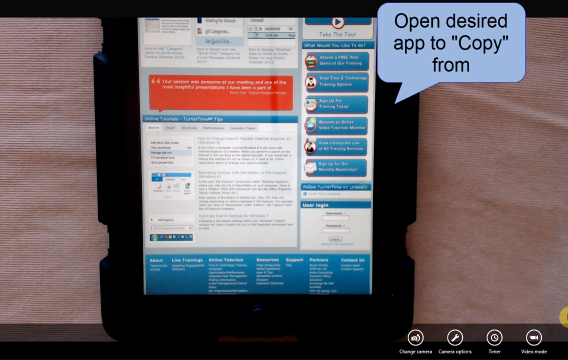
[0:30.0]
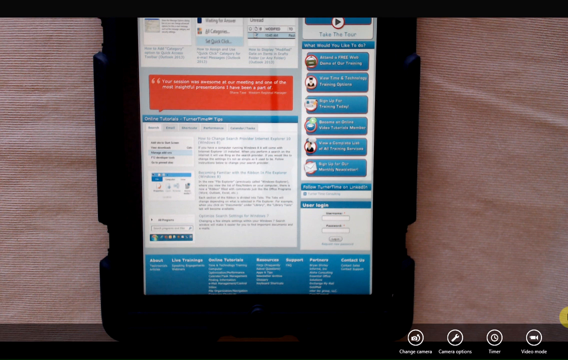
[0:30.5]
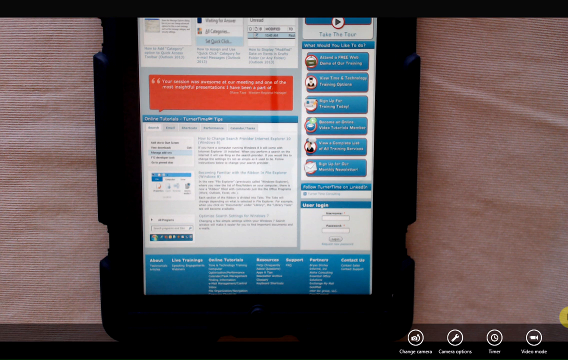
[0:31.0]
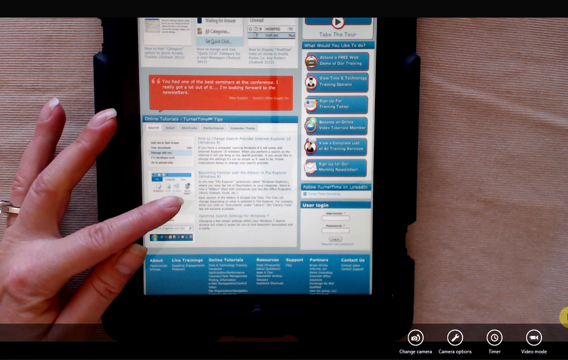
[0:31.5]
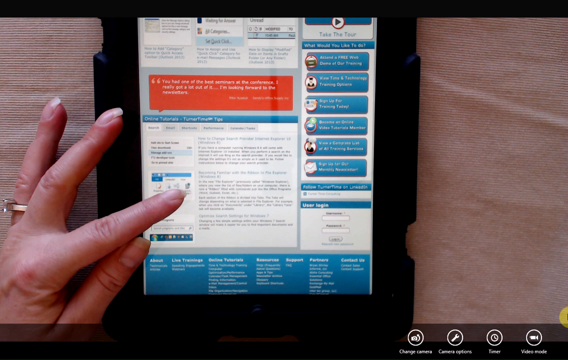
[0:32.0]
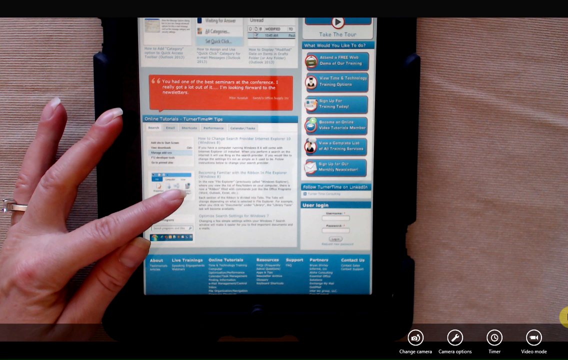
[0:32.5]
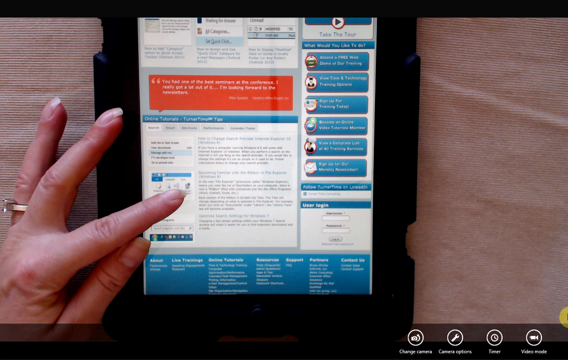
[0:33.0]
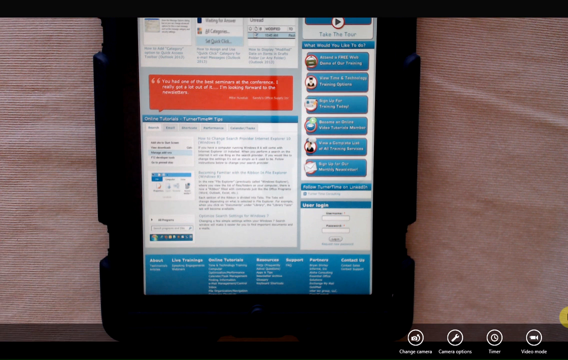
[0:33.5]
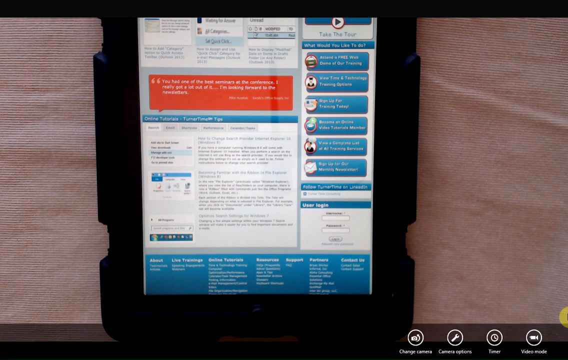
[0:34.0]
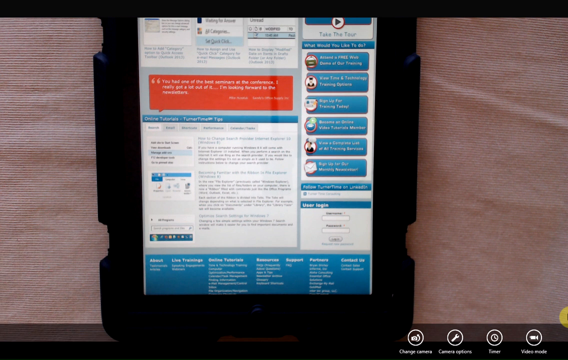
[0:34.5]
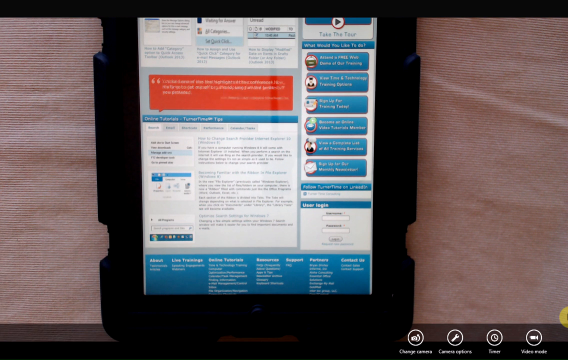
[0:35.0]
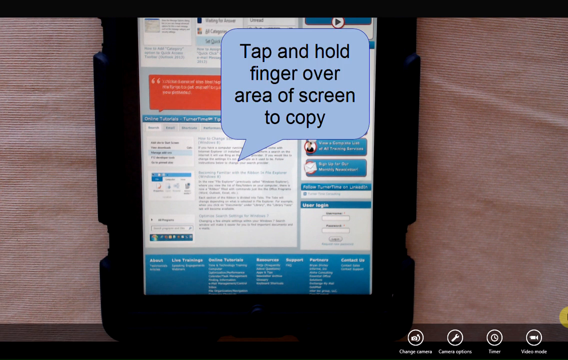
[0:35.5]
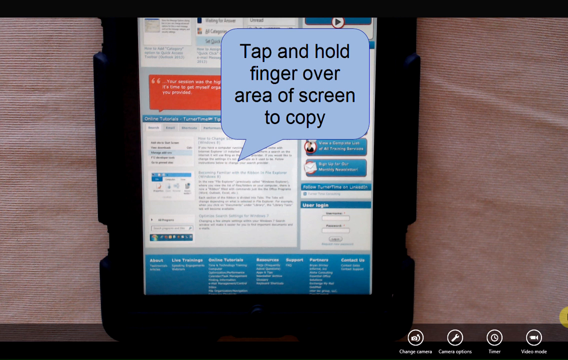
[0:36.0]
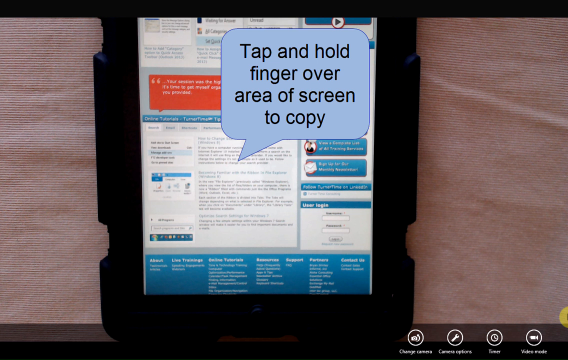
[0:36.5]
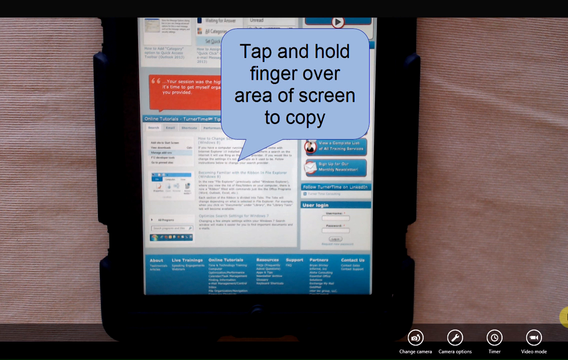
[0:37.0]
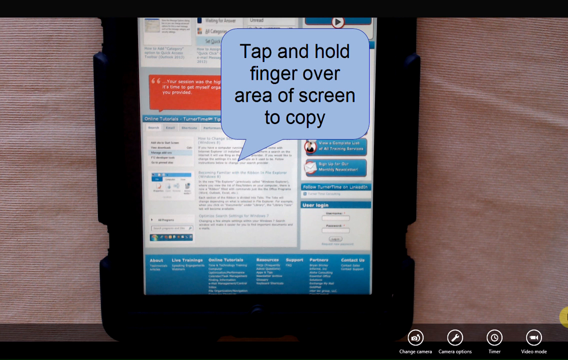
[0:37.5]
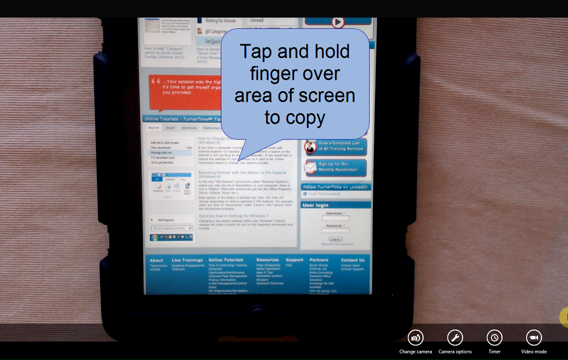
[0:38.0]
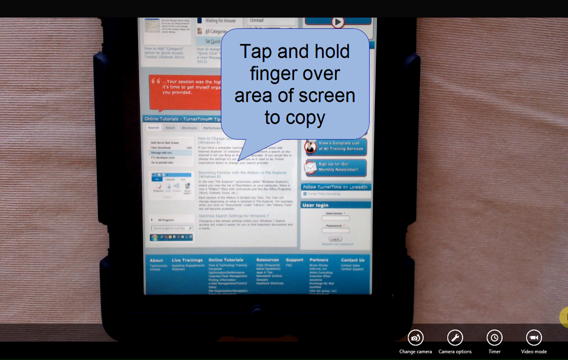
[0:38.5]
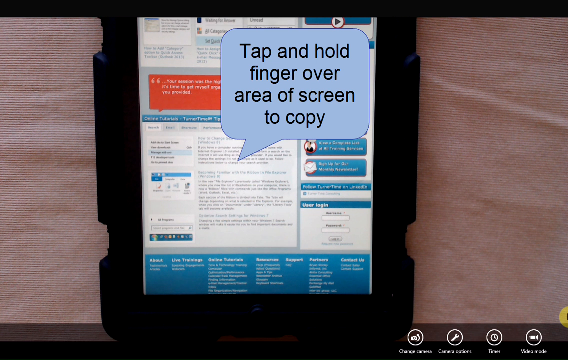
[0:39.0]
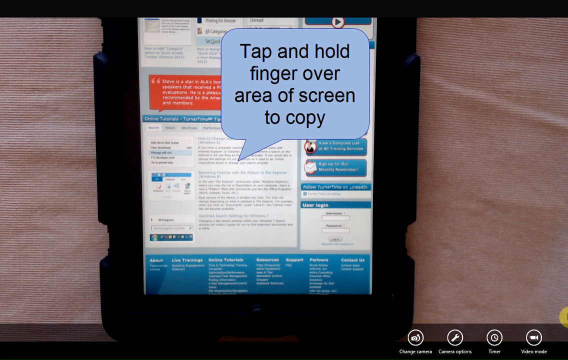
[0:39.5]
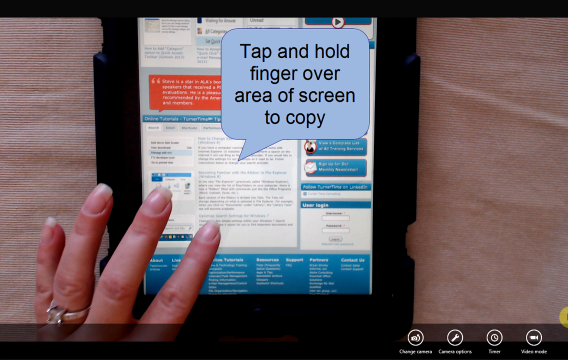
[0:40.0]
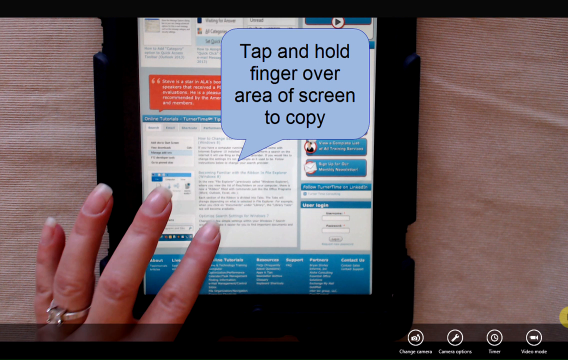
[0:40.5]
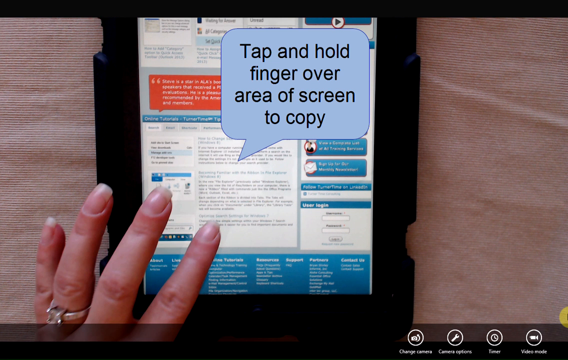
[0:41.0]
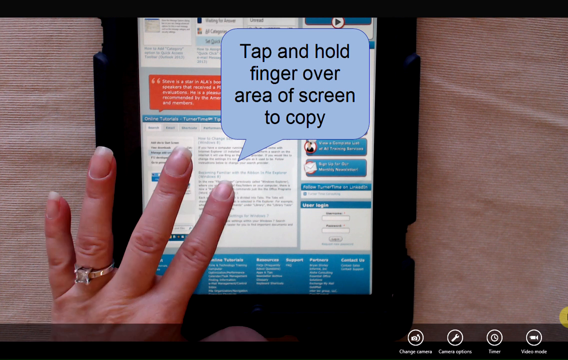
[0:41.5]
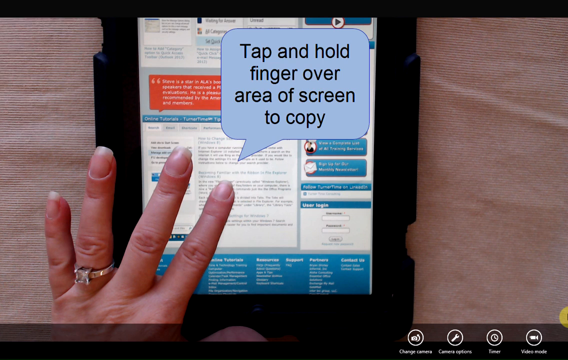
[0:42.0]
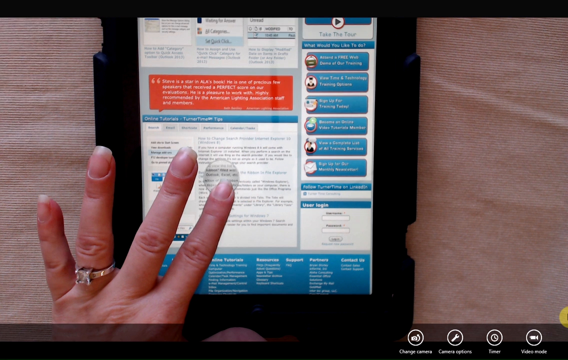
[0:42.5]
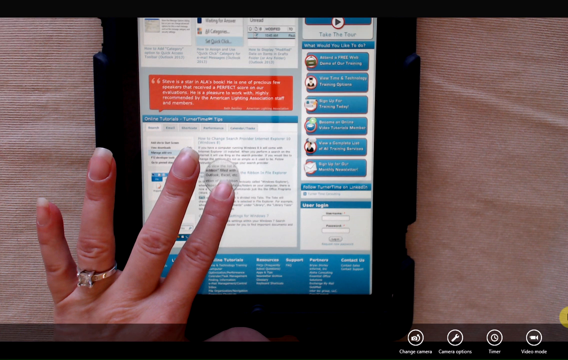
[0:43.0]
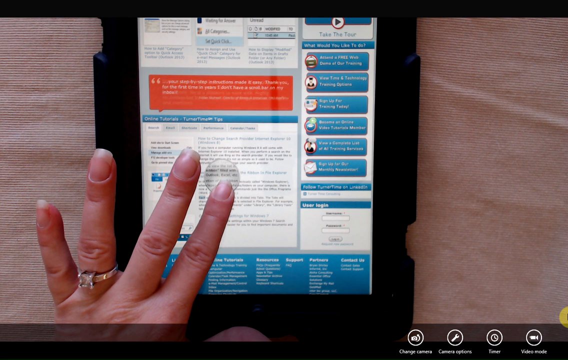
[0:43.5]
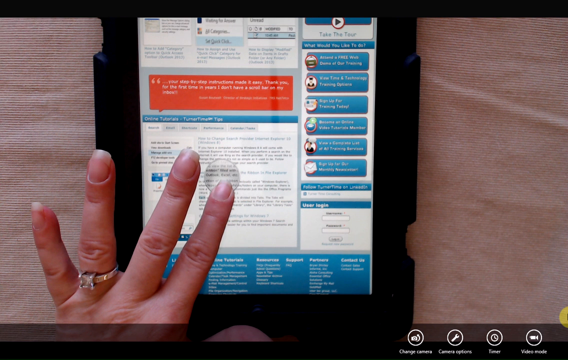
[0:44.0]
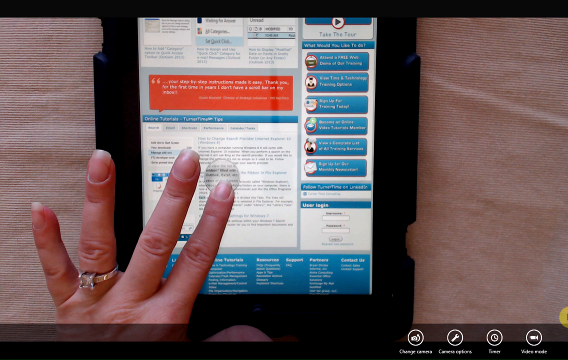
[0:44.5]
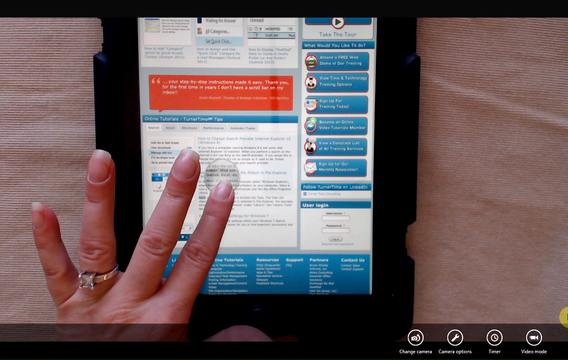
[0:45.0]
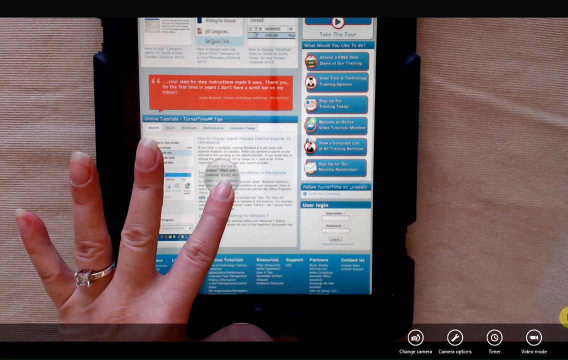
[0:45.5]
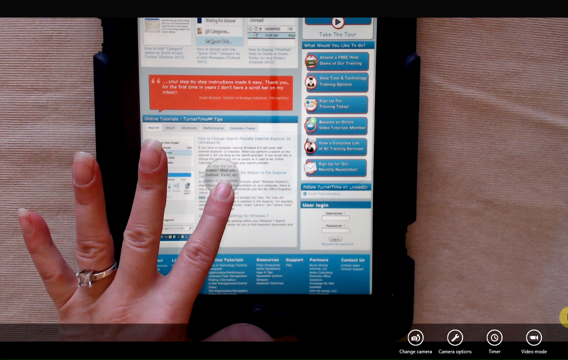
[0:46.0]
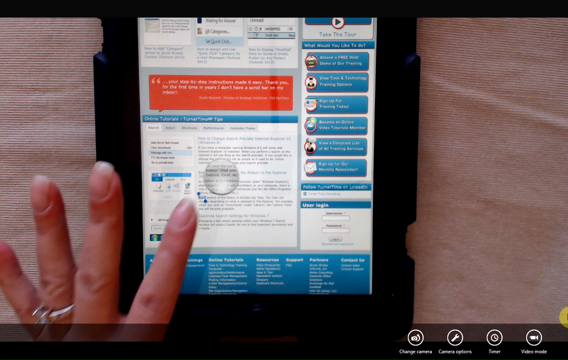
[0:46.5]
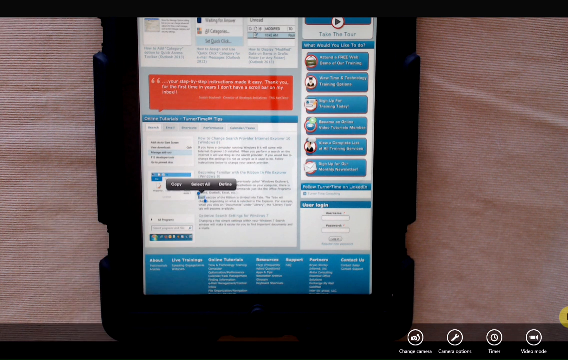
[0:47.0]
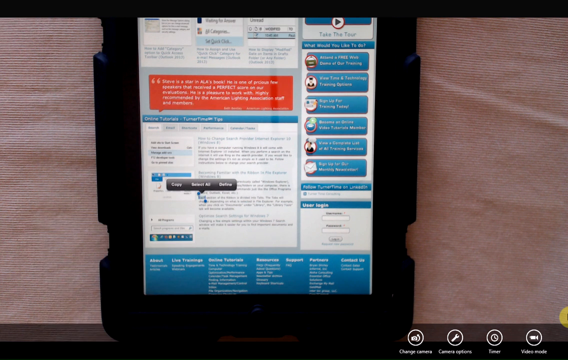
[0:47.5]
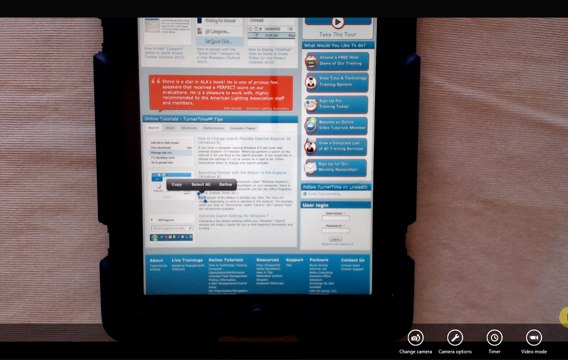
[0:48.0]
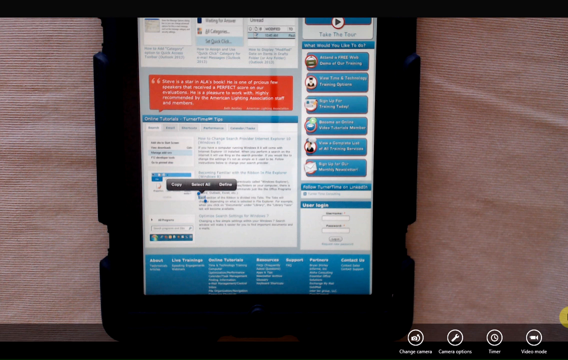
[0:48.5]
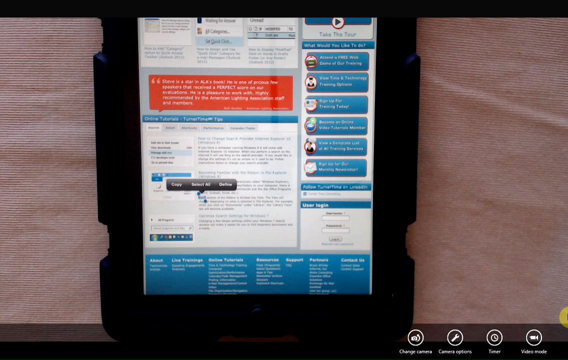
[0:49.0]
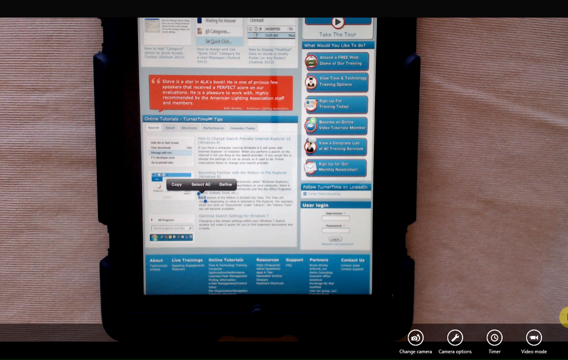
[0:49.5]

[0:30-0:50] Text says "tap and hold the finger over the area of the screen to copy," and a person's hand comes in and selects some text. Options for copy appear, and text reads "open desired app to copy from." The video looks dated and moves slowly, its frames almost like a slideshow. The iPad shows the Turner Time Management website. Options on the right read "what would you like to do, attend a free web demo of our training, view time and technology training options, sign up for training today, become an online video tutorial member, view a complete list of all training services, or sign up for our monthly newsletter." There is also a login area, an online tutorials section and a turner time tips section.